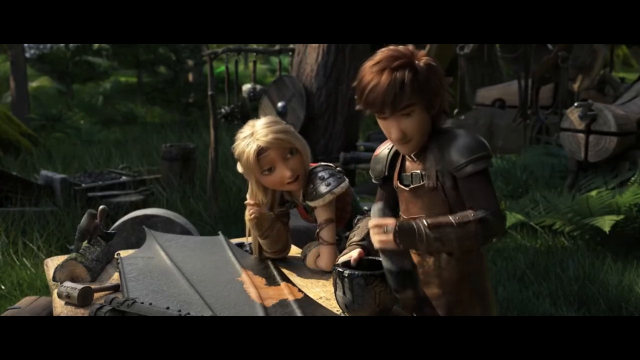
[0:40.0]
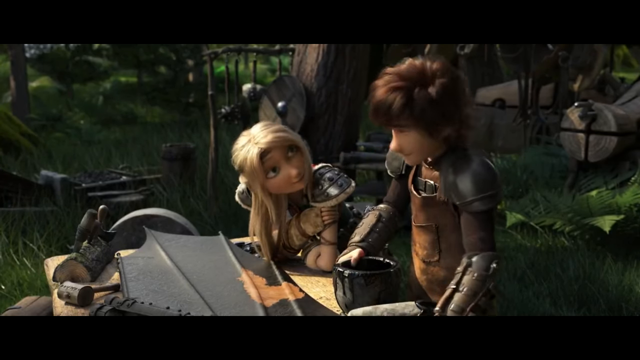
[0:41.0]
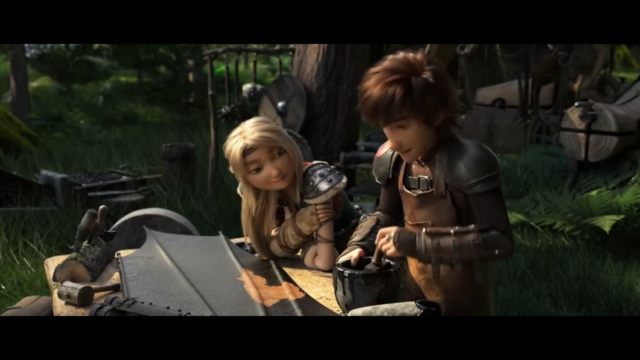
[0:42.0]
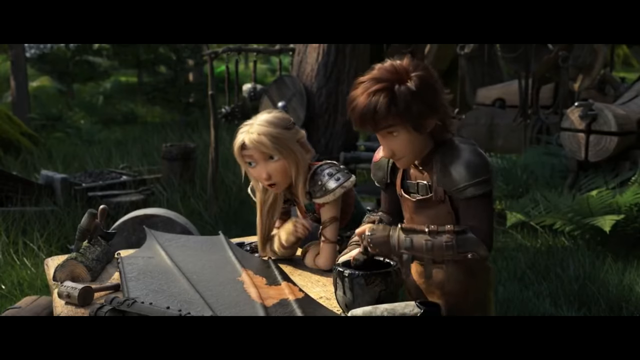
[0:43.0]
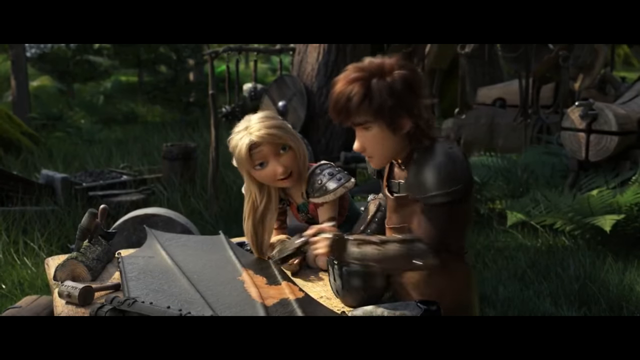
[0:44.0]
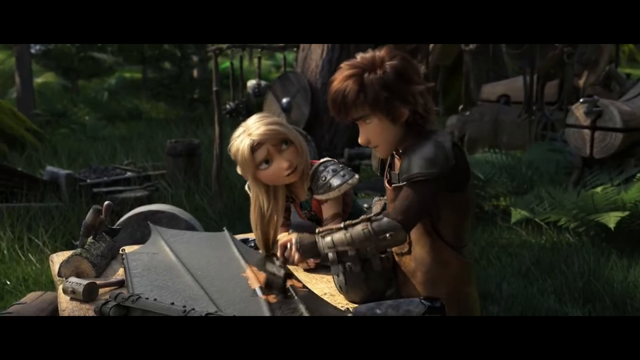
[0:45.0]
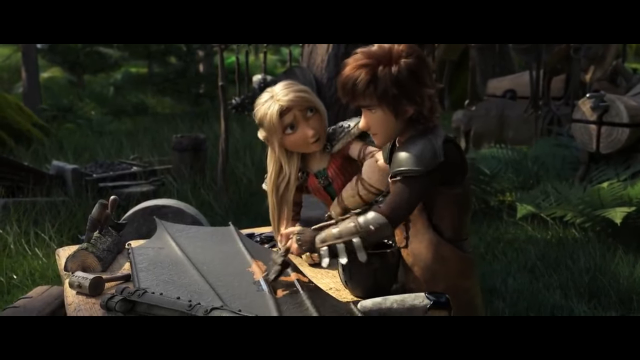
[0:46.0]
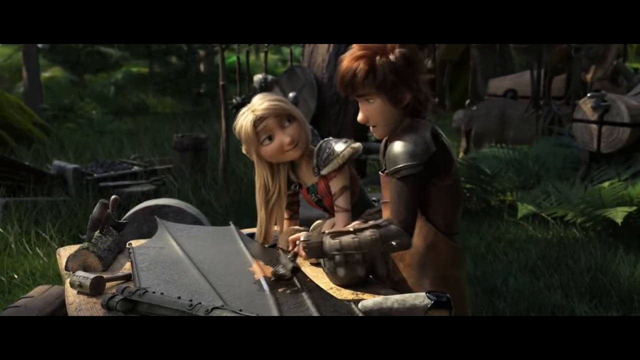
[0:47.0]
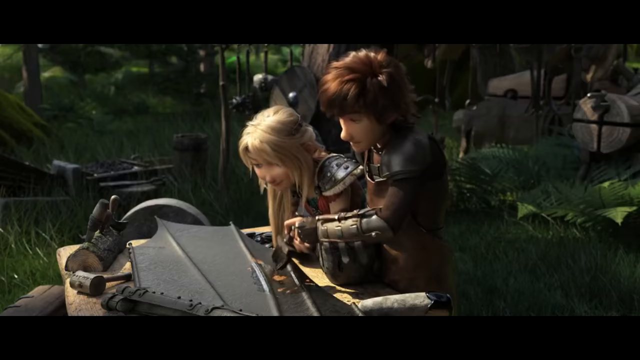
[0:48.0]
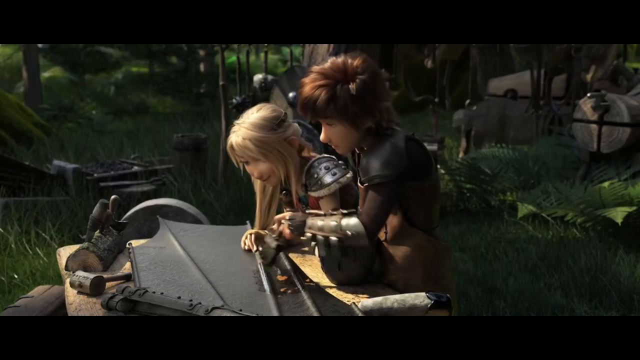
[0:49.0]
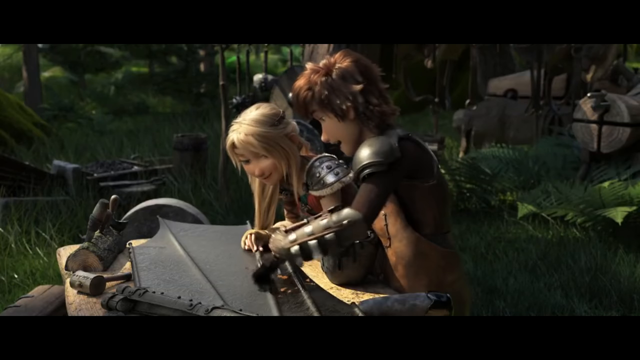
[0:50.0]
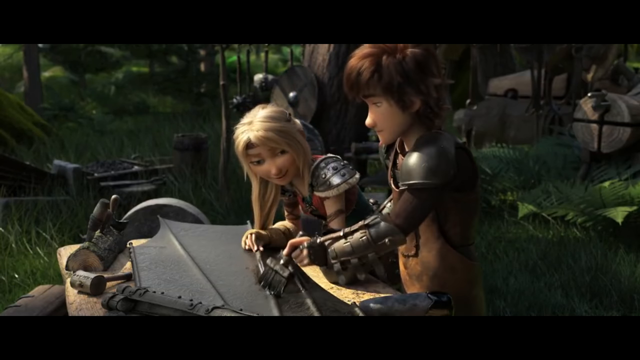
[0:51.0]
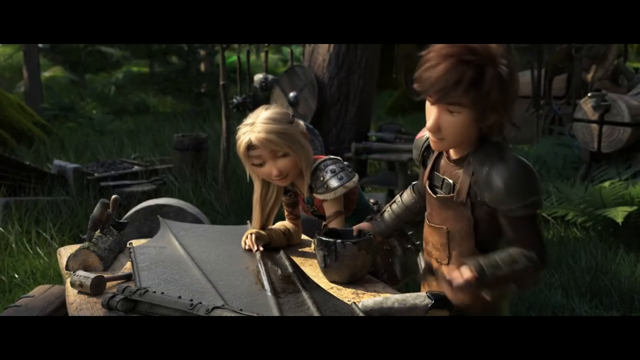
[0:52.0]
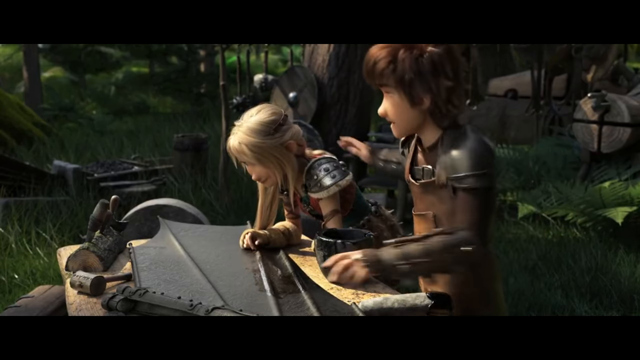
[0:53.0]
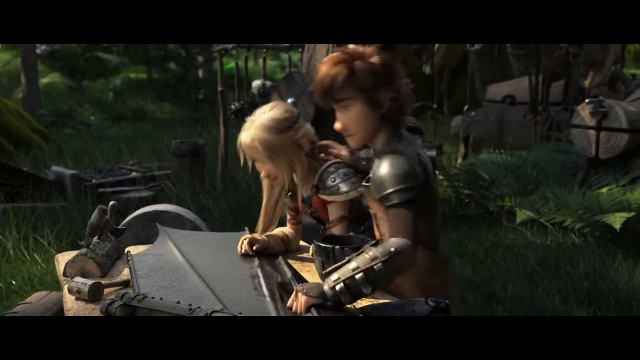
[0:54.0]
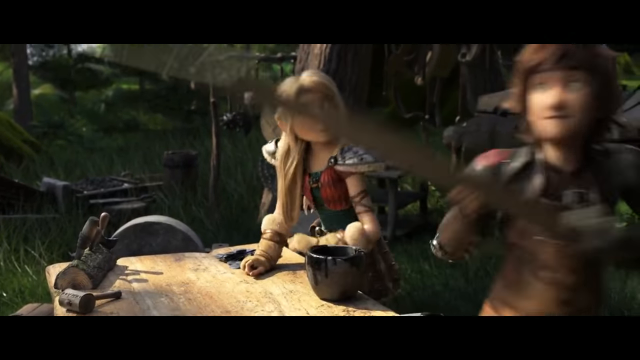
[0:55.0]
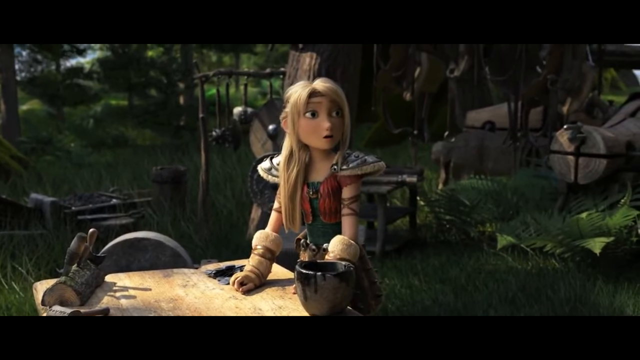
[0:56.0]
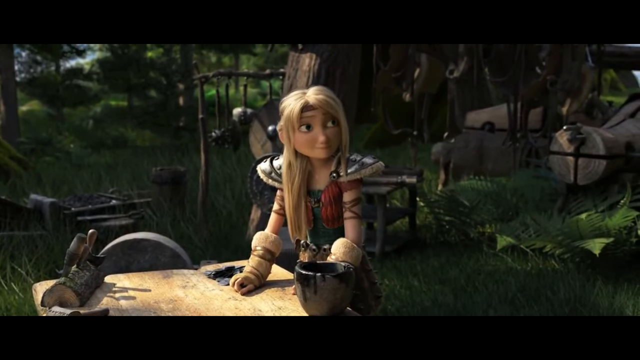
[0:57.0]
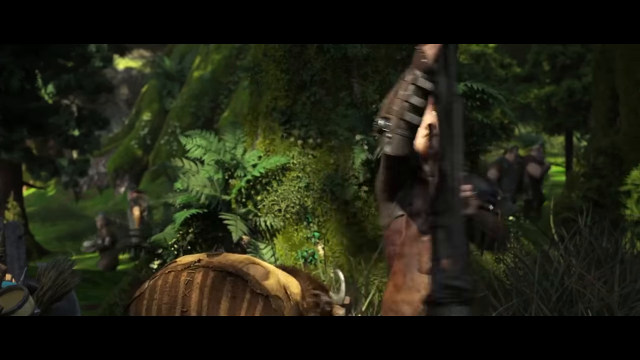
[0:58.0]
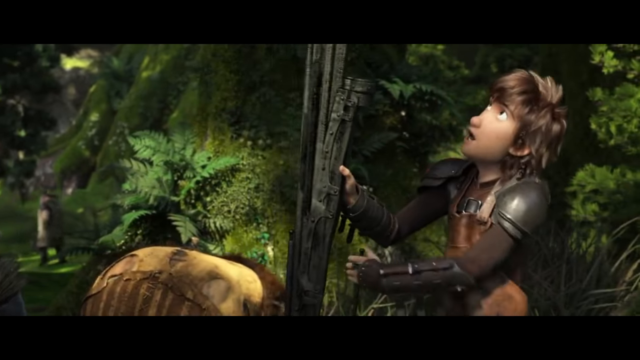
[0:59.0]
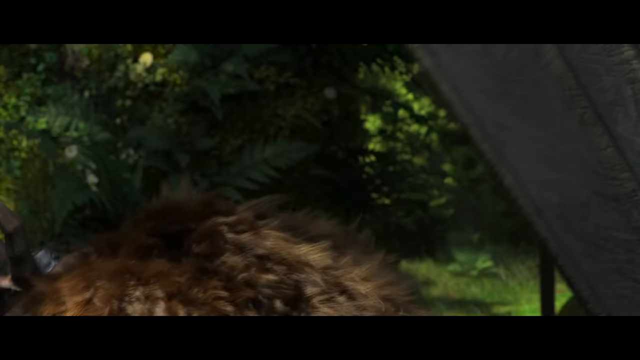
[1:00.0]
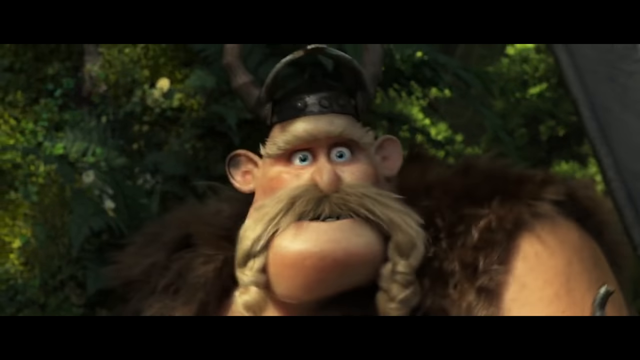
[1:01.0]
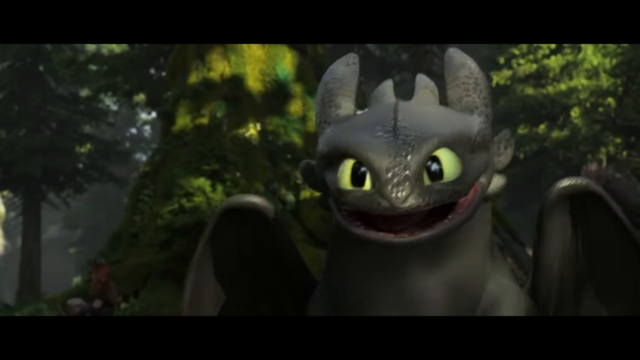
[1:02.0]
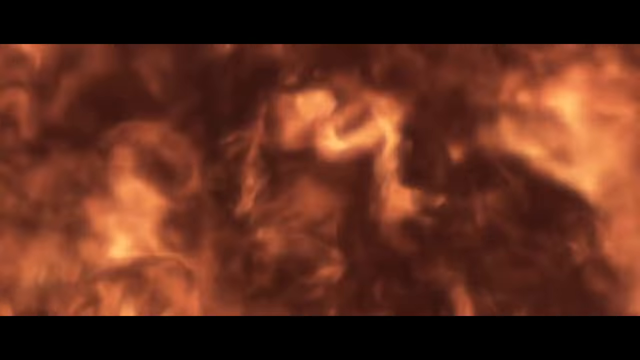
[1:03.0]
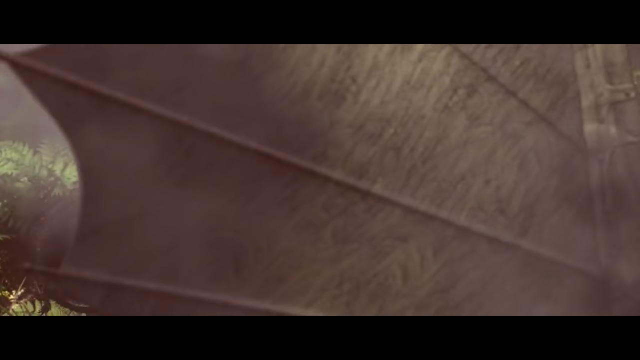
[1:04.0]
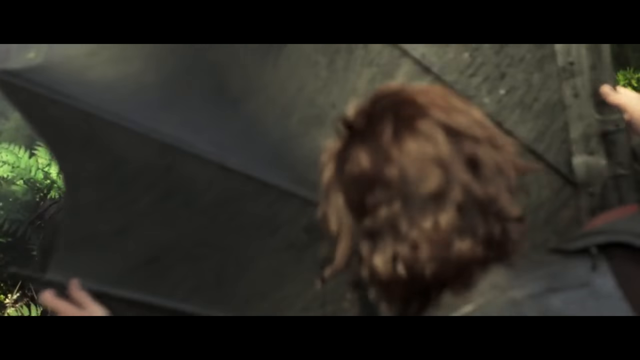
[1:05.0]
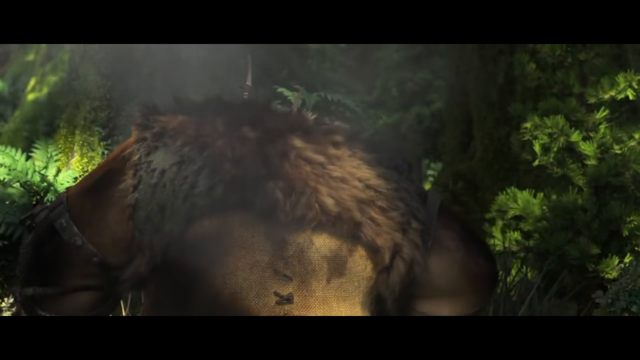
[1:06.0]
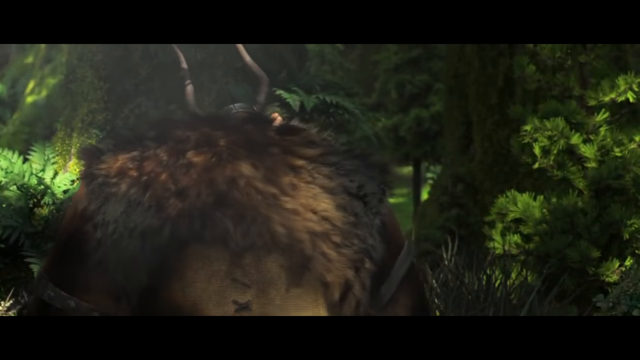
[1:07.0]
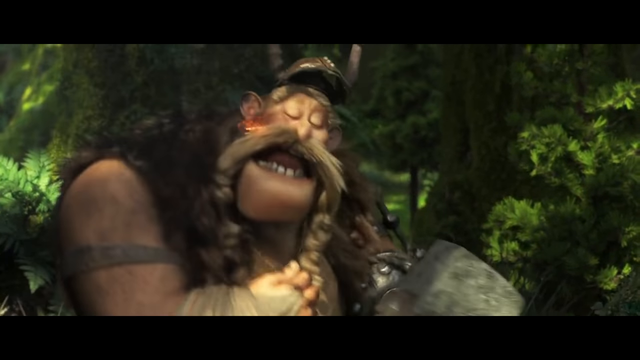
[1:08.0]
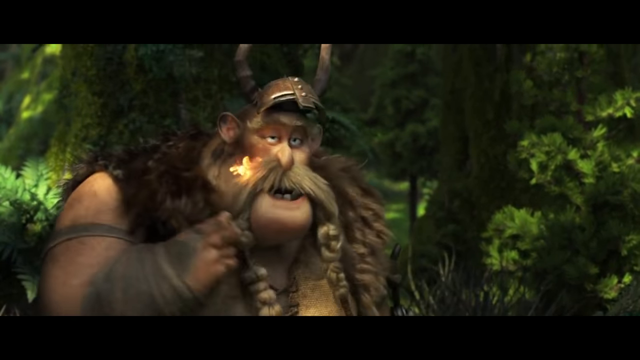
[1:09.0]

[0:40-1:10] The boy and the woman both have some type of shield on their shoulders. He crushes whatever the woman put into the bowl, using a piece that apparently came off the bowl to smash it around. She leans forward with both elbows on the work desk he is using. He seems to have crushed something to make paint, because he then uses his left hand to paint a mechanical-like wing. He kisses her on the head, walks away, and puts the wing down. A guy there gets hit with the wing. A dragon comes blowing fire and sets that man on fire.